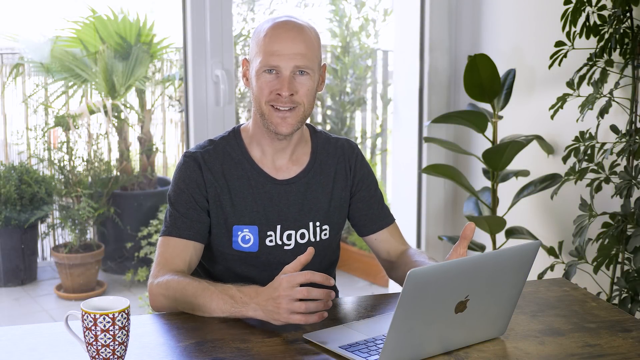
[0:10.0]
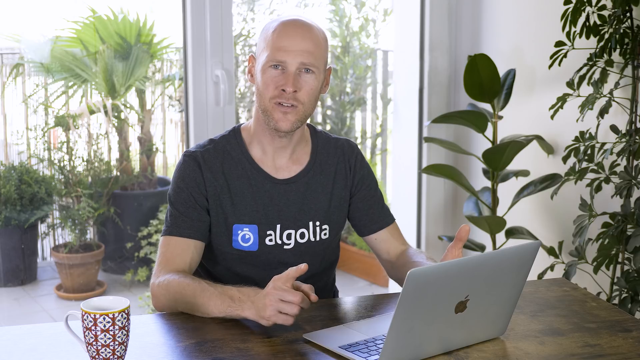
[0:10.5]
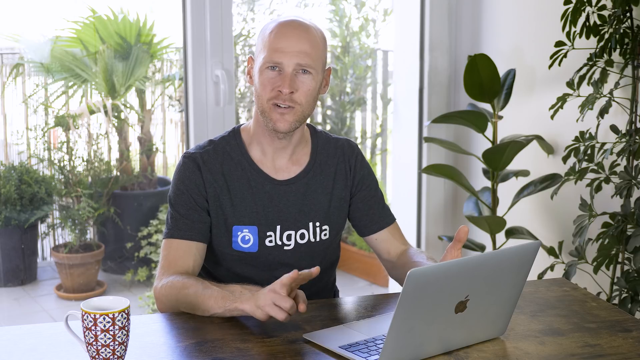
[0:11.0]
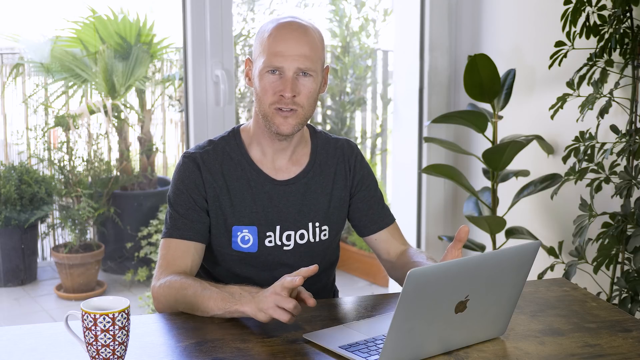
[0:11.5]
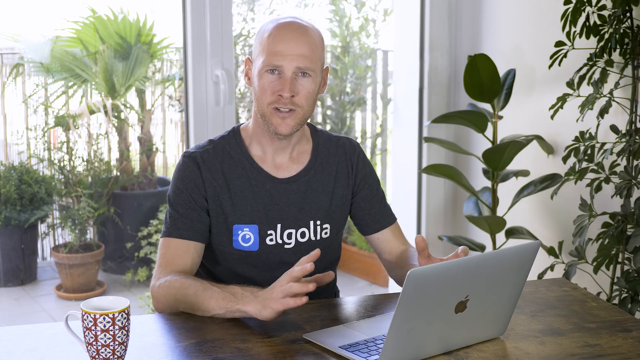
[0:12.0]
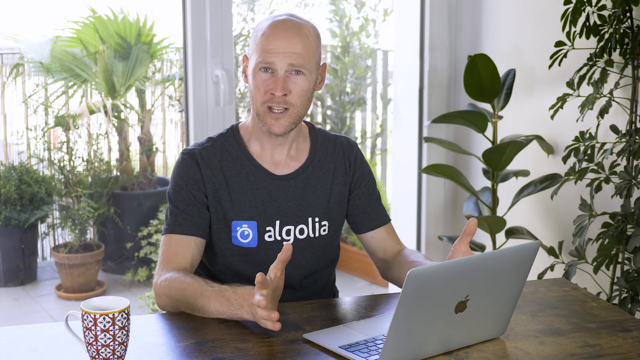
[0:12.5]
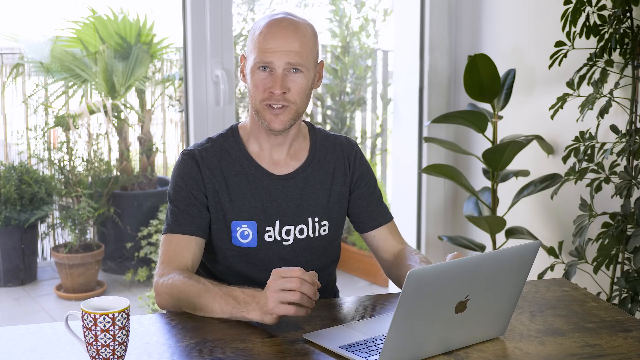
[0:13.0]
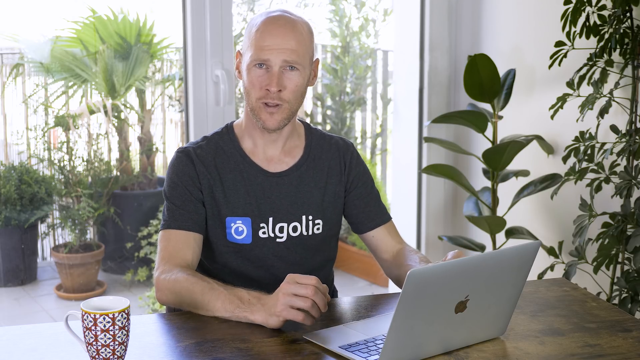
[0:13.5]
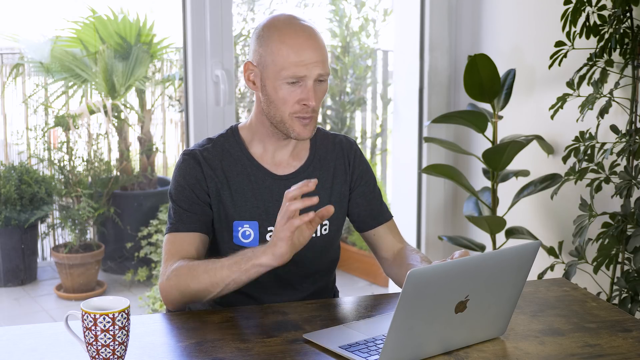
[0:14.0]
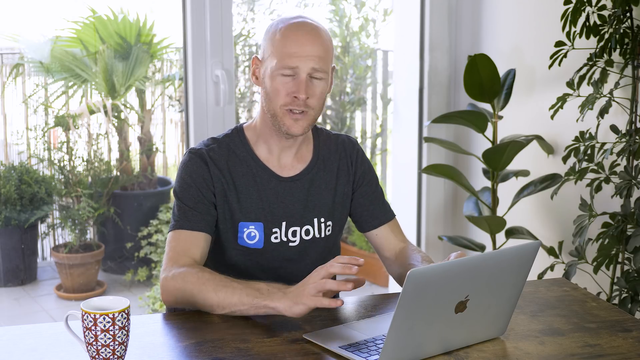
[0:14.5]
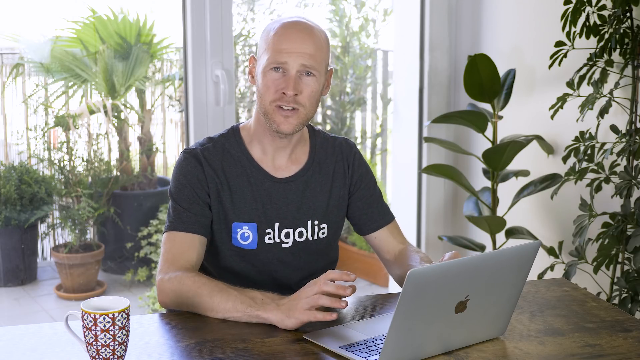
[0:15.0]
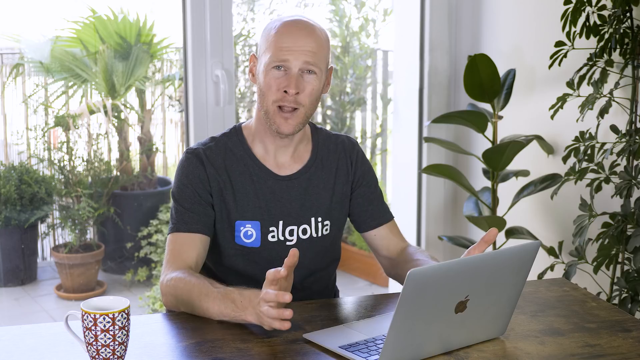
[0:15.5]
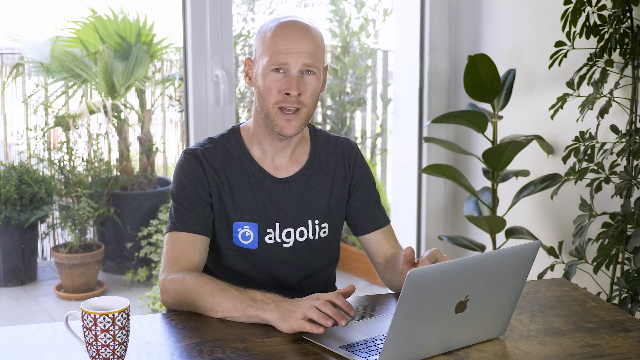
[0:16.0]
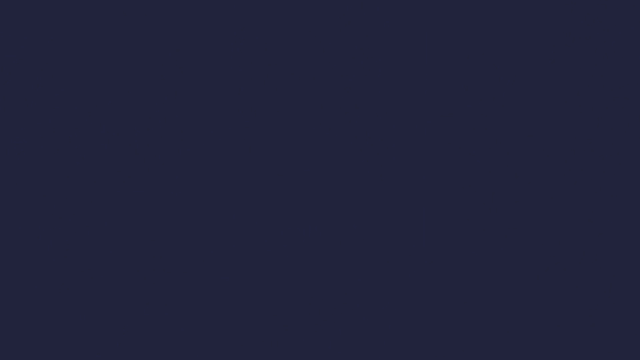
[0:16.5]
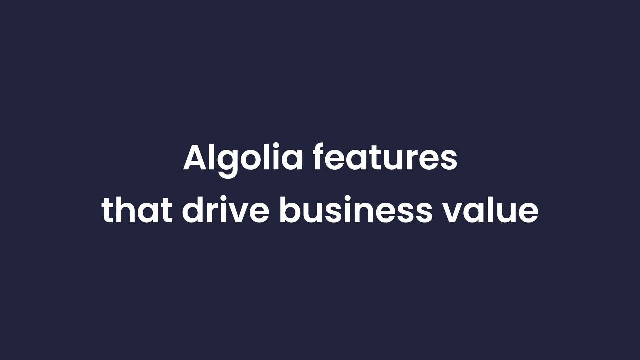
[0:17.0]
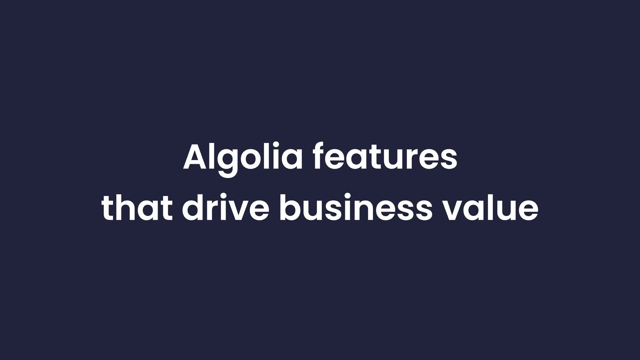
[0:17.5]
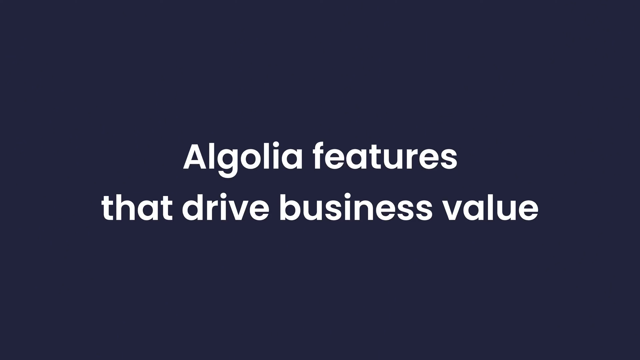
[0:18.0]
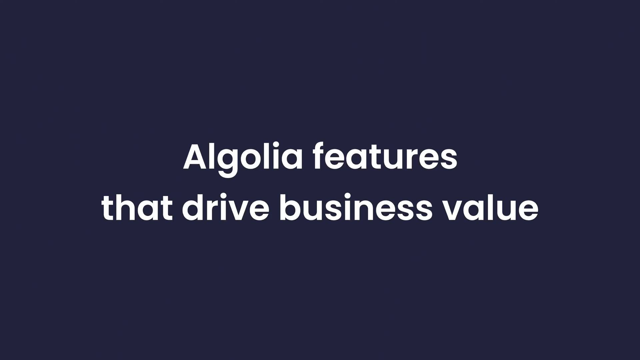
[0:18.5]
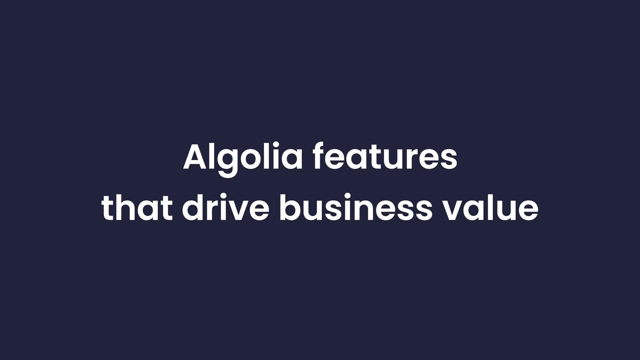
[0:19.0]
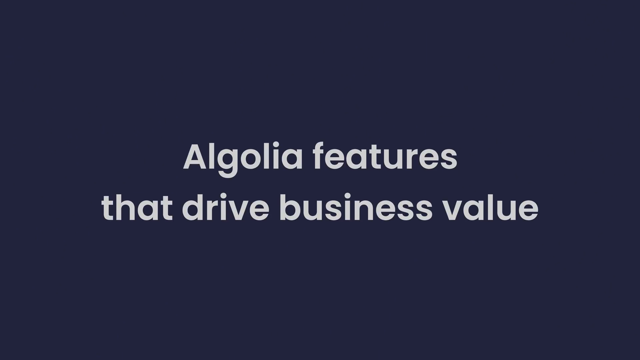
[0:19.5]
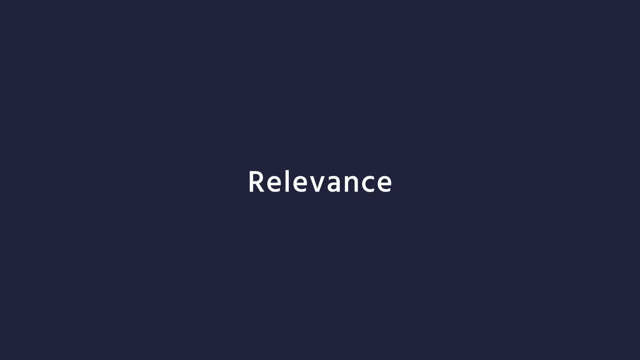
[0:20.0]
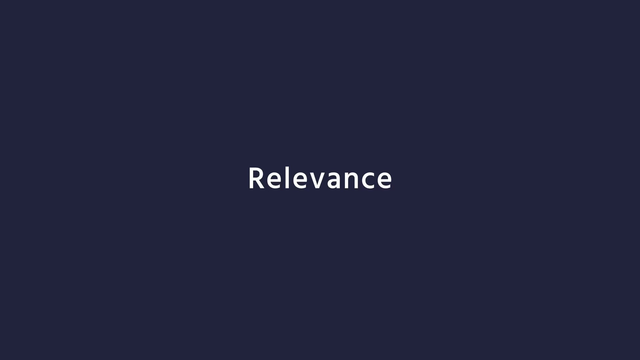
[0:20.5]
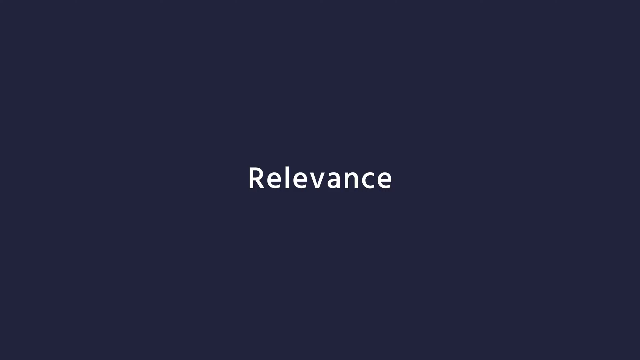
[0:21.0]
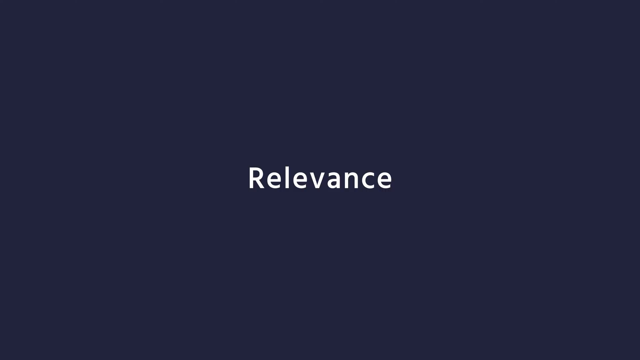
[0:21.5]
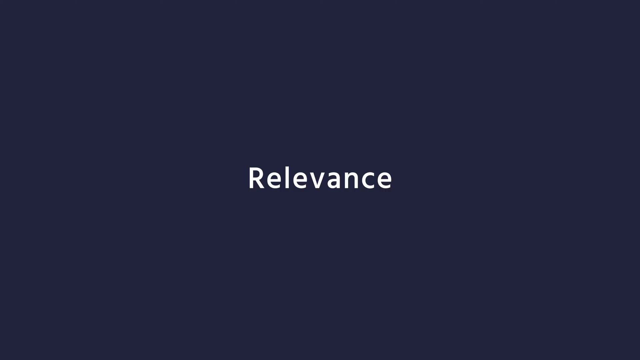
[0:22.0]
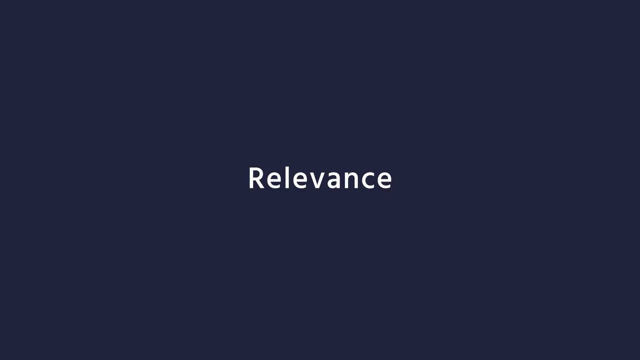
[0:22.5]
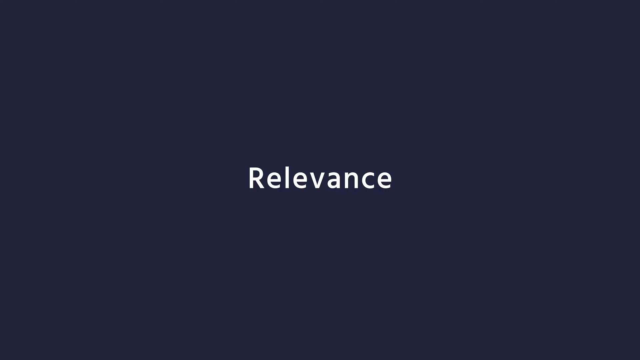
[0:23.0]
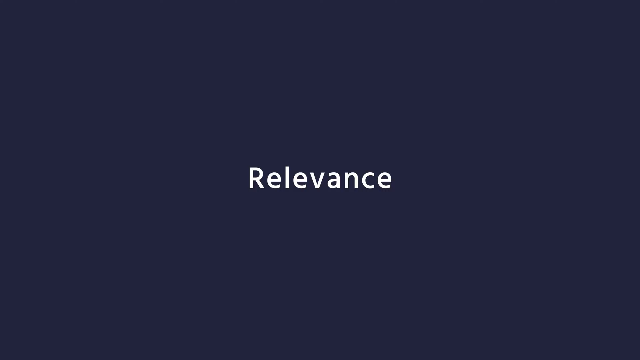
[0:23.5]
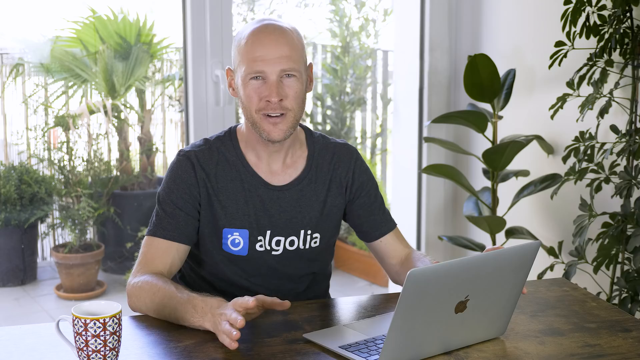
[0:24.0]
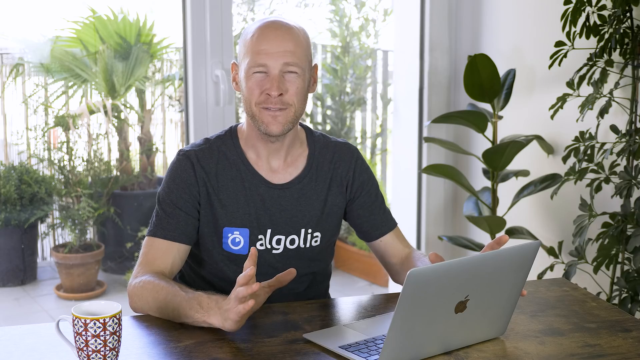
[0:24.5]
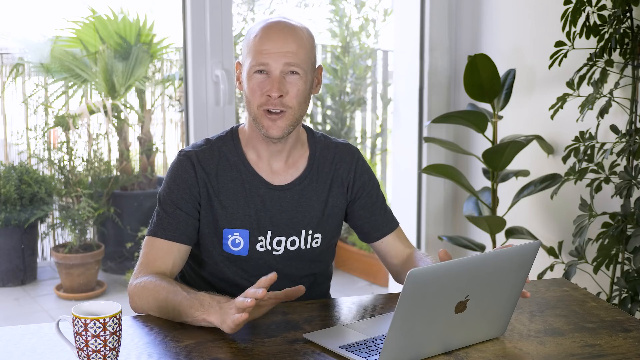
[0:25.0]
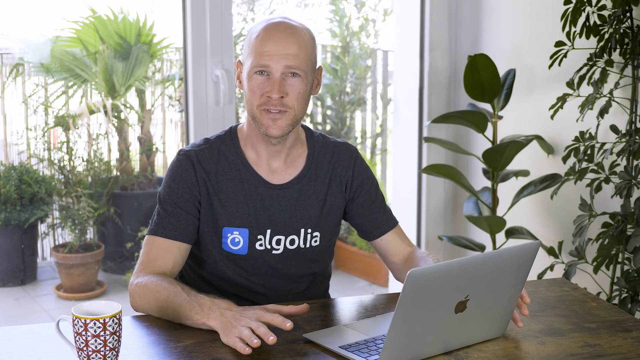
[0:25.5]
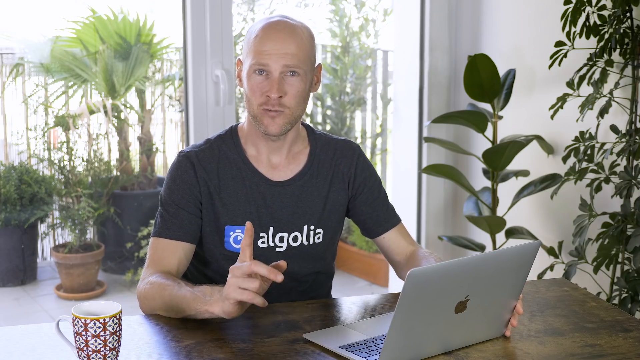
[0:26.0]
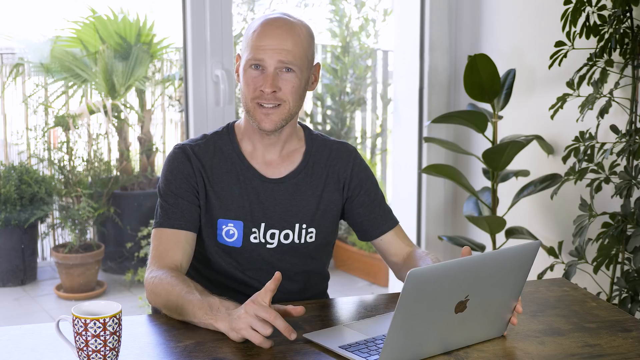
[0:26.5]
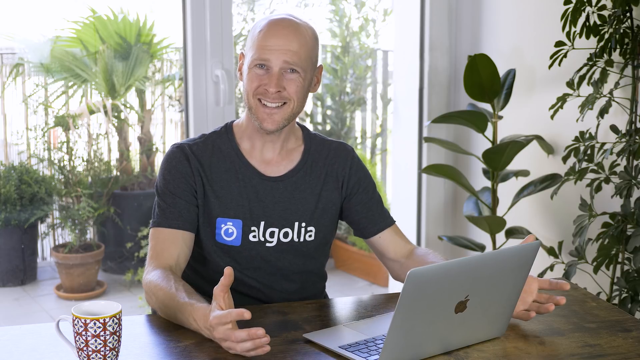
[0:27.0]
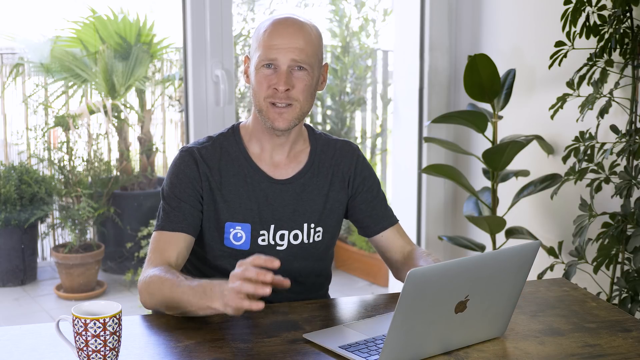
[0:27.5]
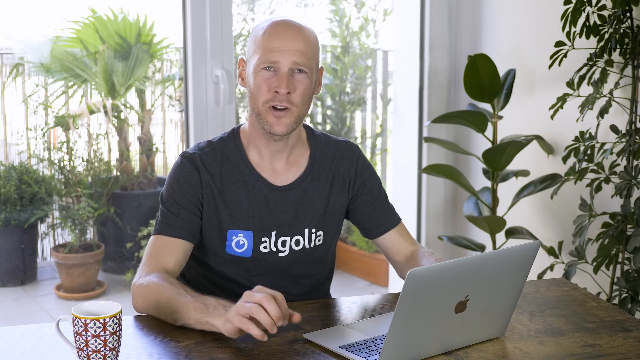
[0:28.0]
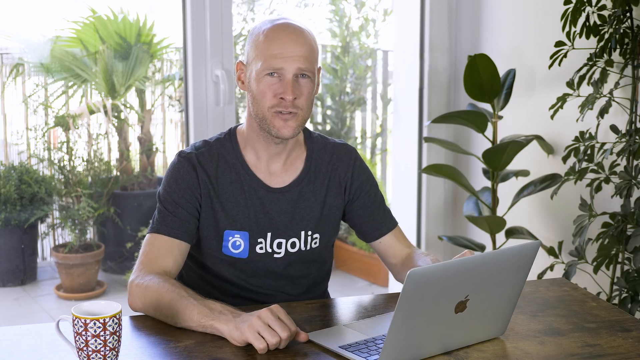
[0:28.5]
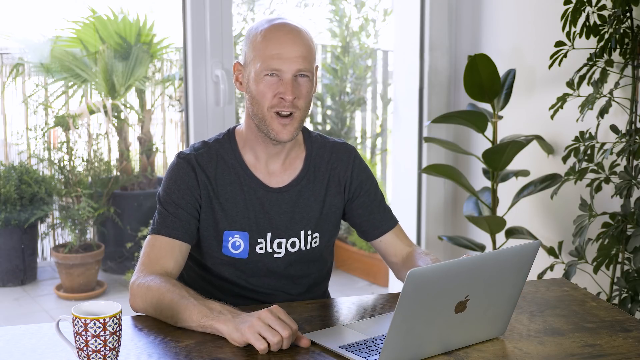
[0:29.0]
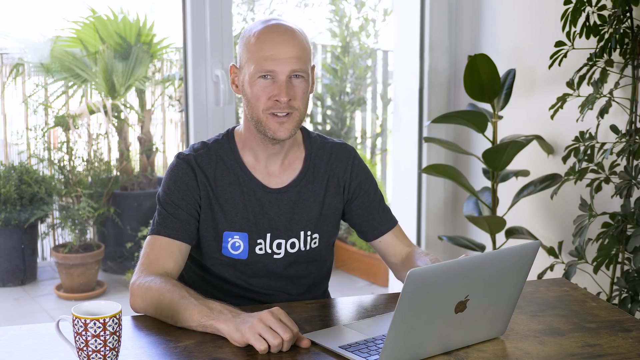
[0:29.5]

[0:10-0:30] A man promotes something called Algolia, possibly related to time management. He seems to be in a kitchen, with a window behind him that has no screens and has a handle. He is bald with a bit of a scruffy beard growing in, works on a Mac computer, and talks a little with his hands. A coffee cup is off to the left. Text then reads "Algolia features that drive business value, relevance" on a black background. The video cuts back to the man, who is talking again. The coffee cup has diamonds with something like a flower in petal shapes; its background is rust-coloured, it has a yellow rim, the inside of the cup is white, and there is some white in the diamonds as well.